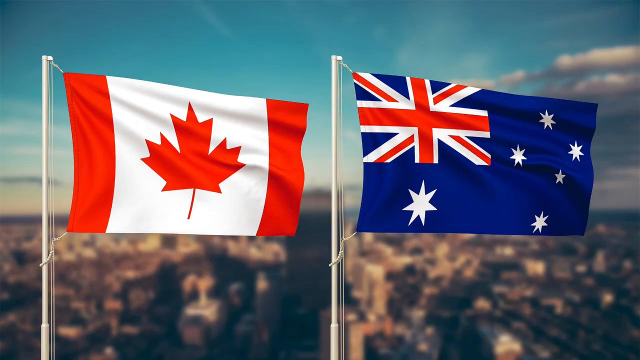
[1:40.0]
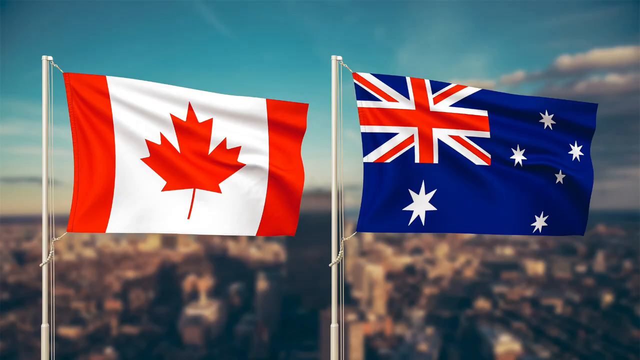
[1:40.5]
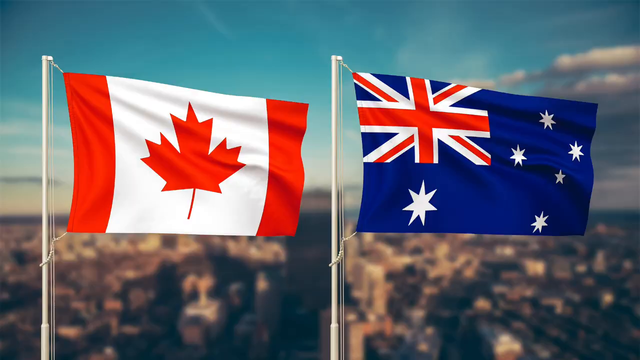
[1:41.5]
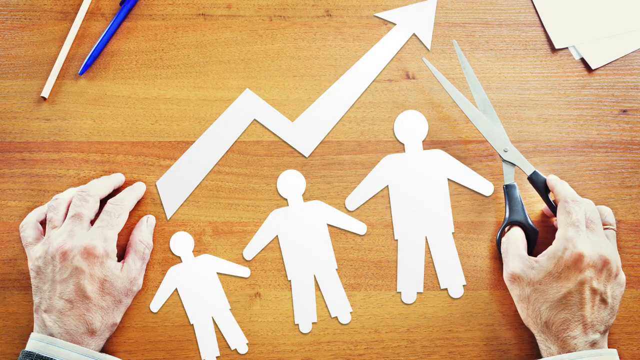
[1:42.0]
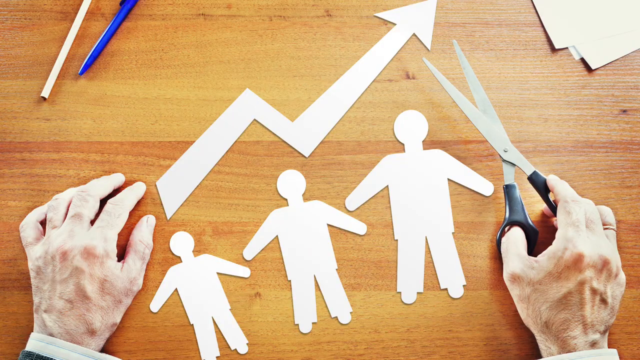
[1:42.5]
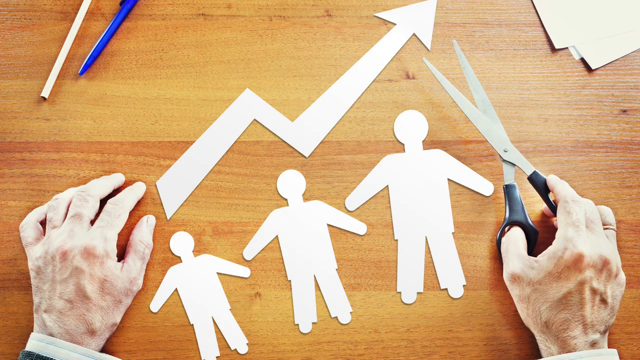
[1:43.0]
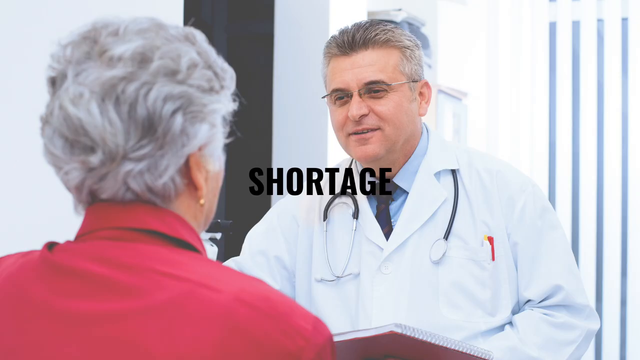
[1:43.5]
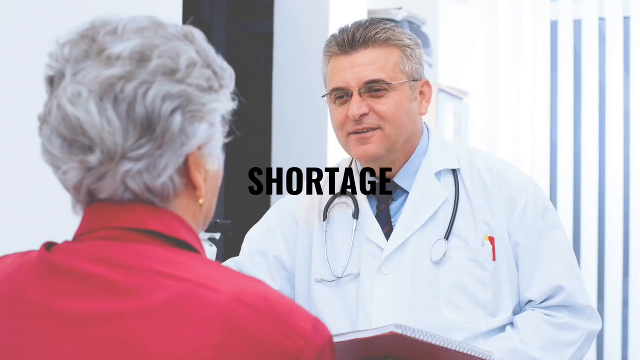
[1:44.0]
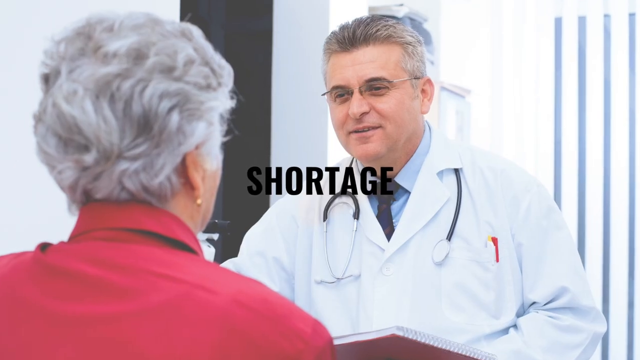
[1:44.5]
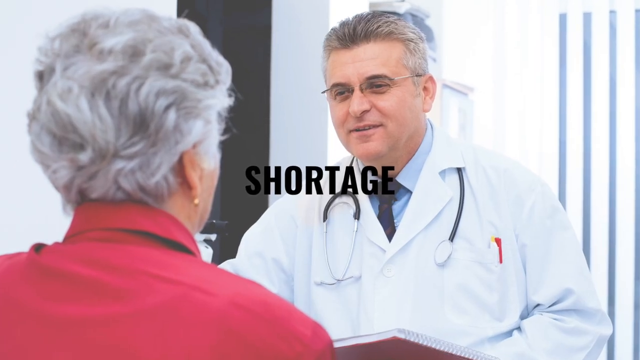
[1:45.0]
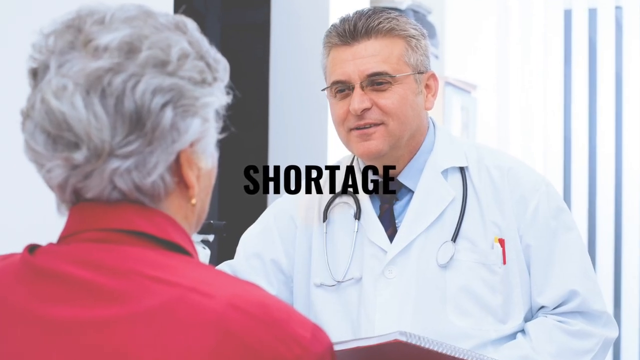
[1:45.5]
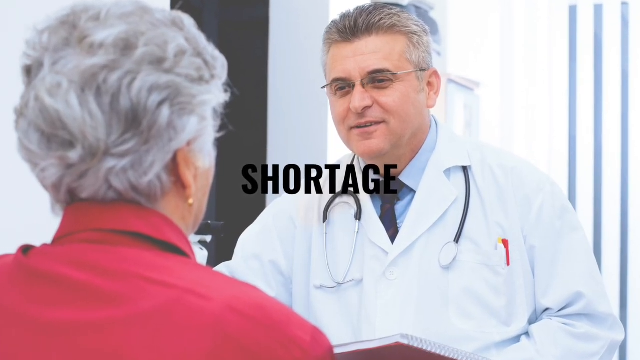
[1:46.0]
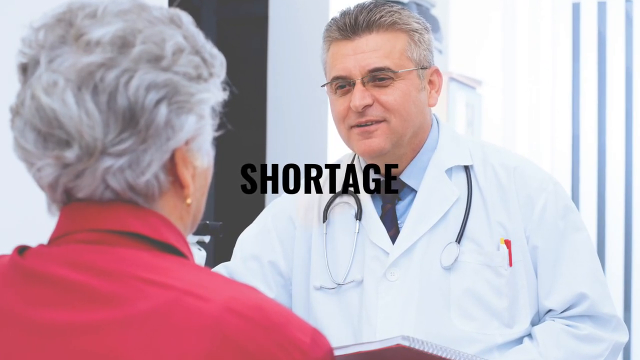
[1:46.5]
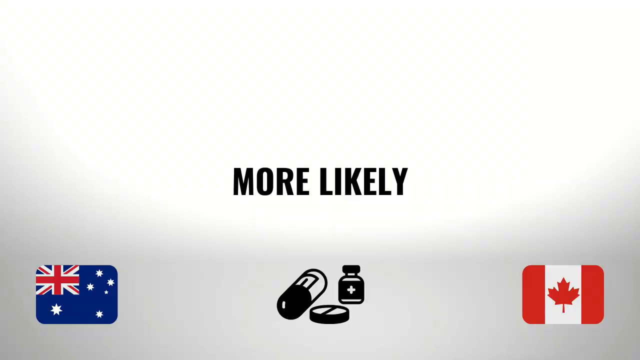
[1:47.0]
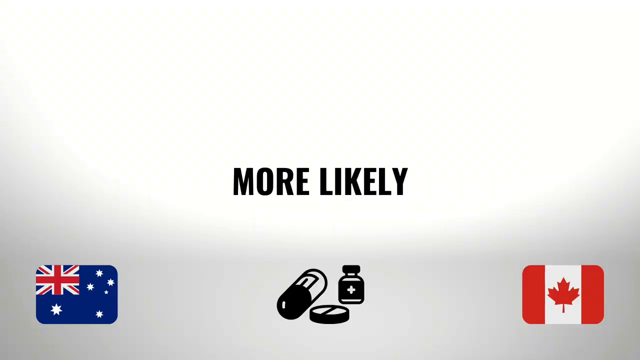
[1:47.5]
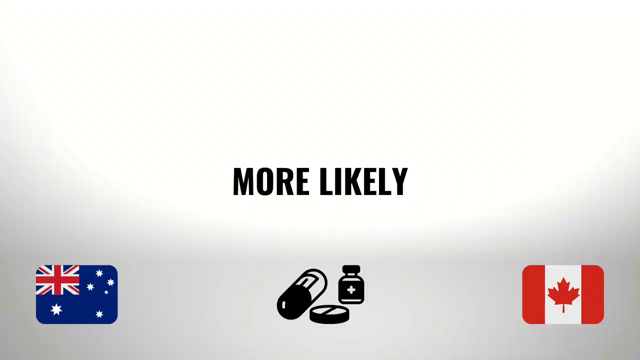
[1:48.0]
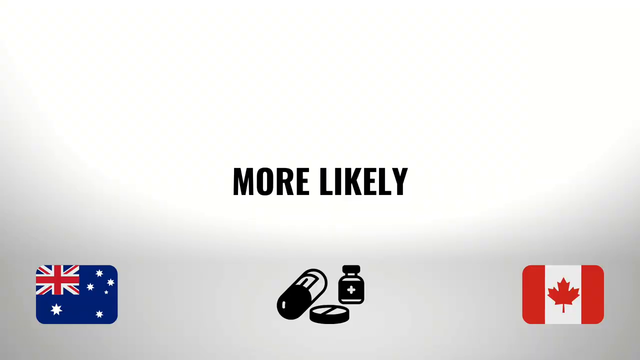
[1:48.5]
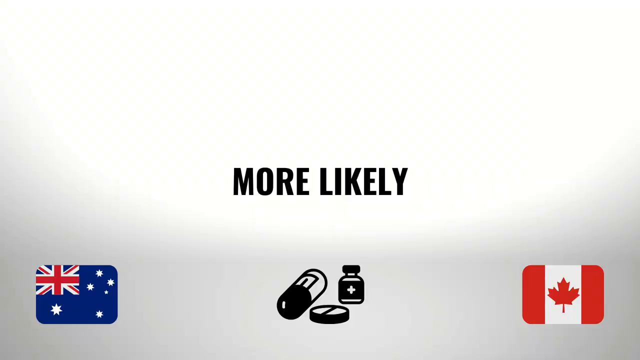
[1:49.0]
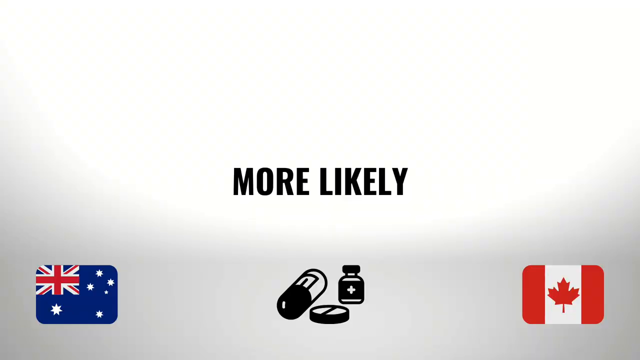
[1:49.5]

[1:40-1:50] Flags, probably the Canadian and British flags, are shown next to each other. Right after the flags, a picture shows somebody at a desk cutting cardboard figures of people, with an arrow. Text says "a shortage" on screen, with a doctor and an older lady. Then text says "more likely," and an older gentleman is shown with a doctor who looks like he is prescribing him something; the doctor is writing with his right hand. The doctor wears a long-sleeved light blue button-up shirt and has a stethoscope around his neck. The old gentleman sitting across from him wears a white and blue striped shirt.